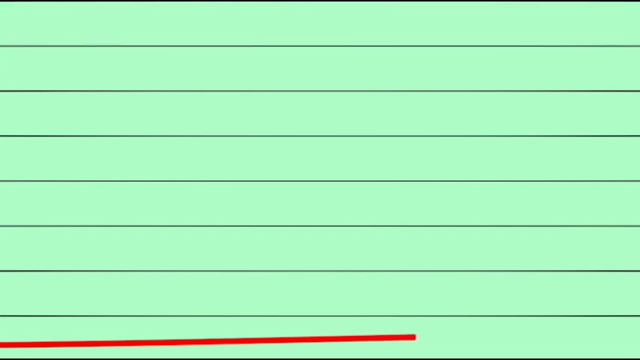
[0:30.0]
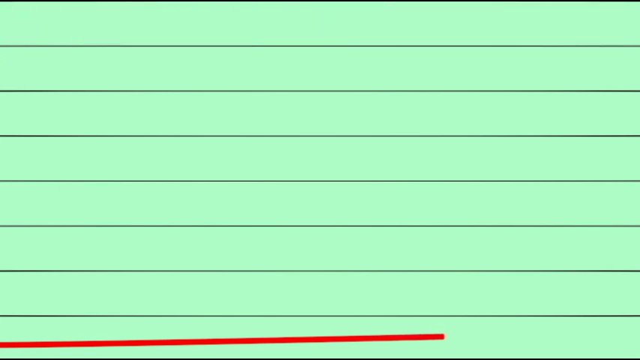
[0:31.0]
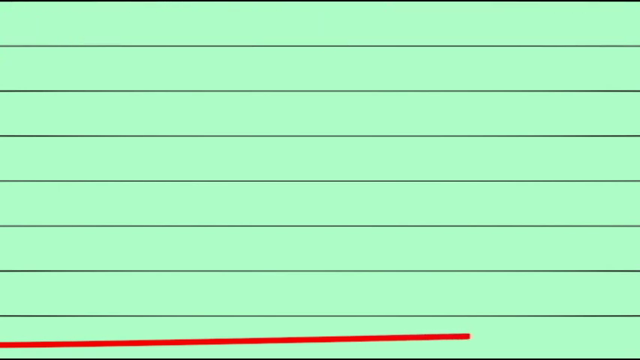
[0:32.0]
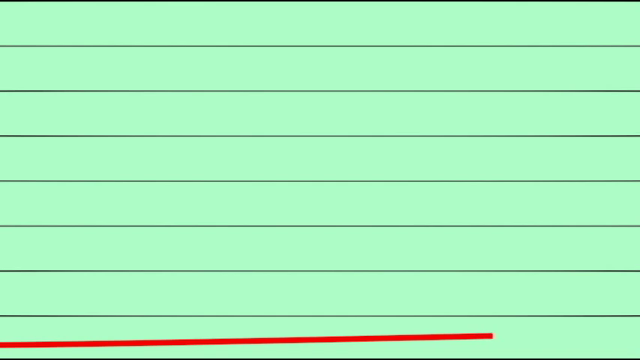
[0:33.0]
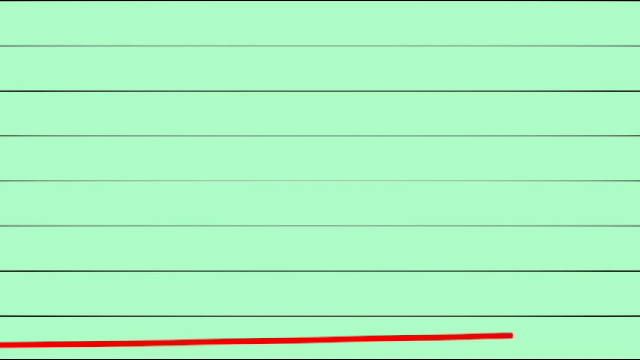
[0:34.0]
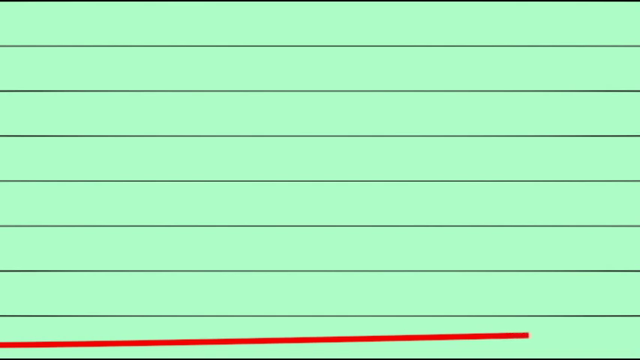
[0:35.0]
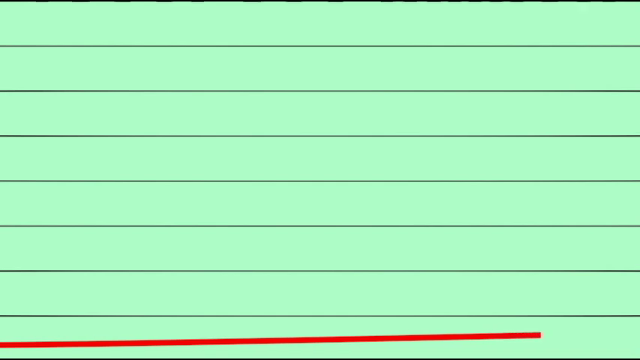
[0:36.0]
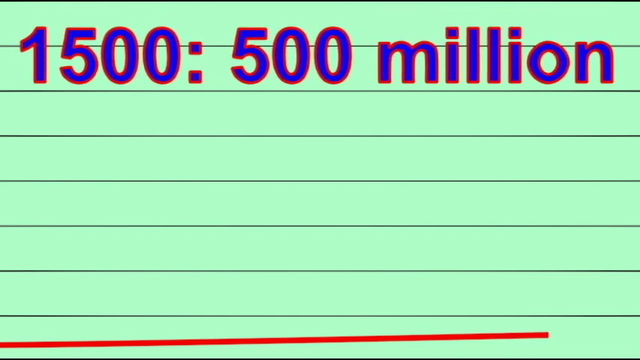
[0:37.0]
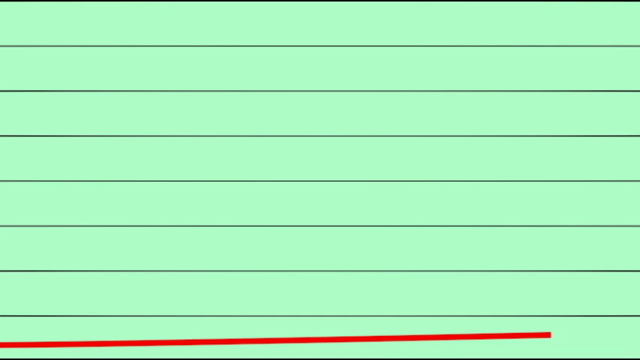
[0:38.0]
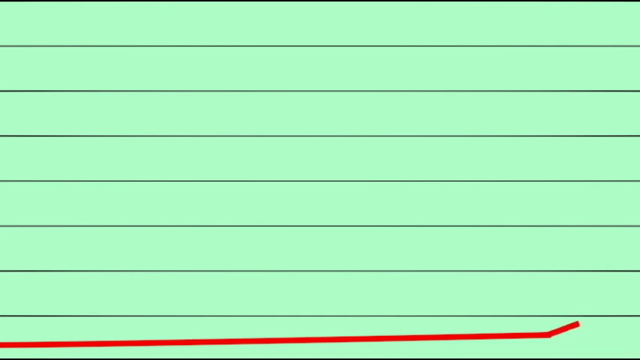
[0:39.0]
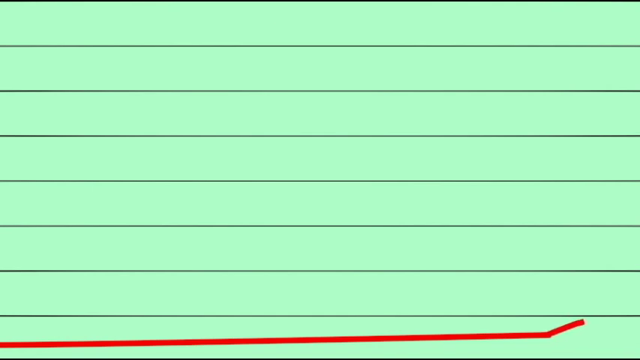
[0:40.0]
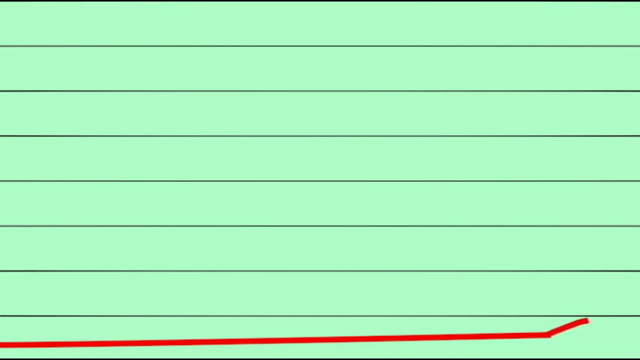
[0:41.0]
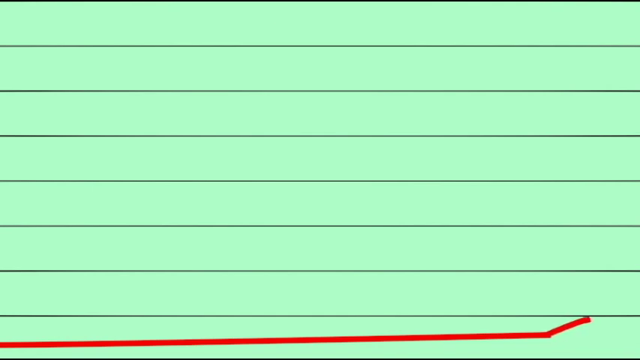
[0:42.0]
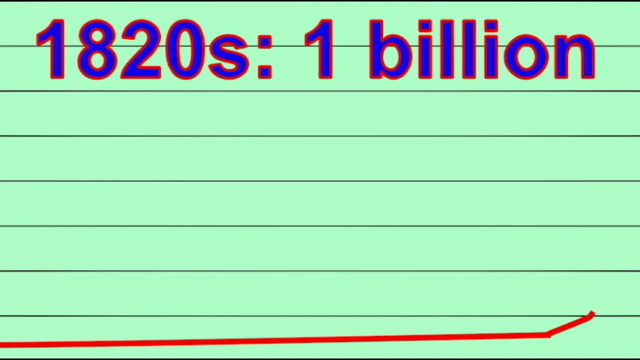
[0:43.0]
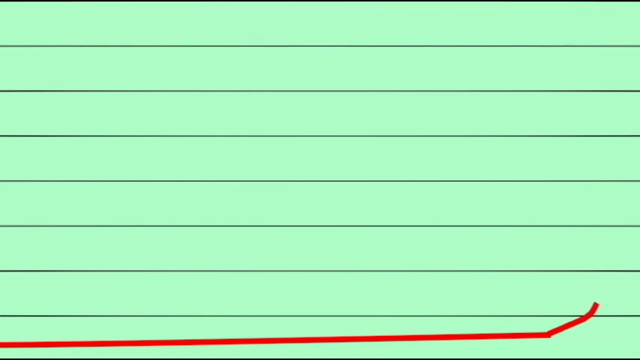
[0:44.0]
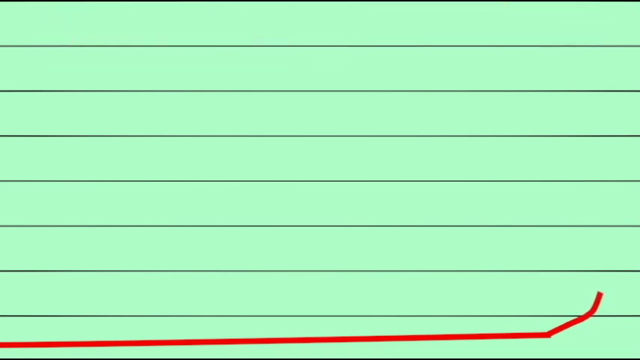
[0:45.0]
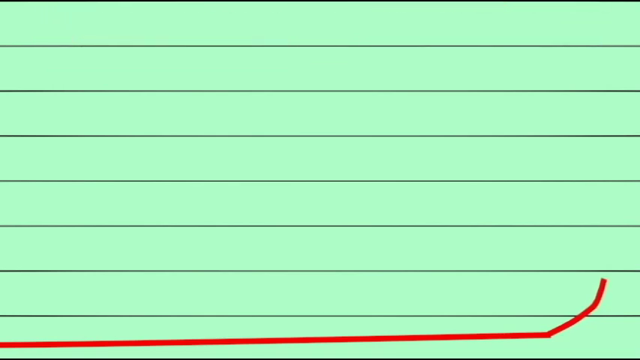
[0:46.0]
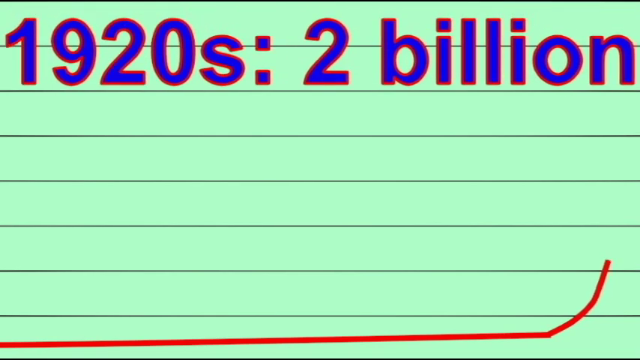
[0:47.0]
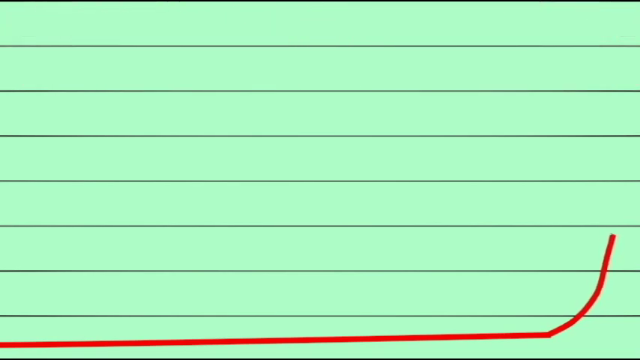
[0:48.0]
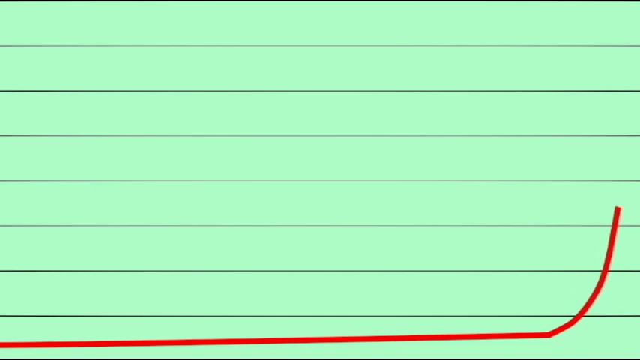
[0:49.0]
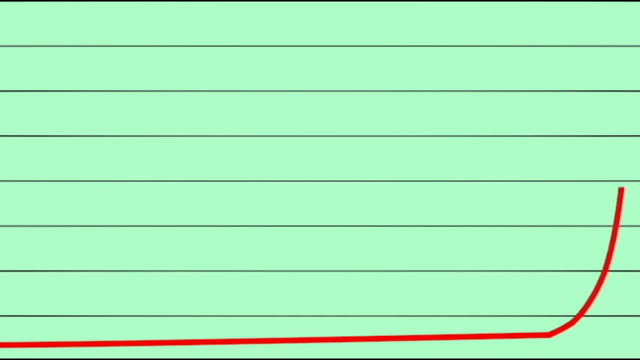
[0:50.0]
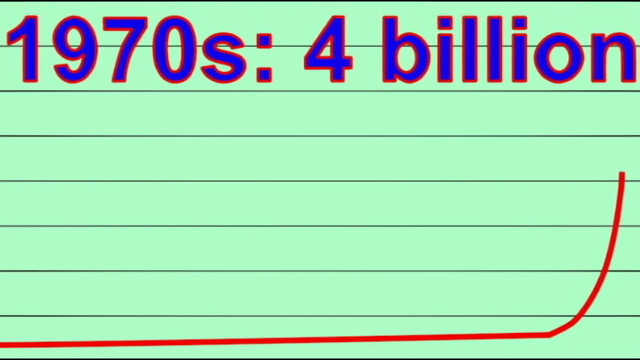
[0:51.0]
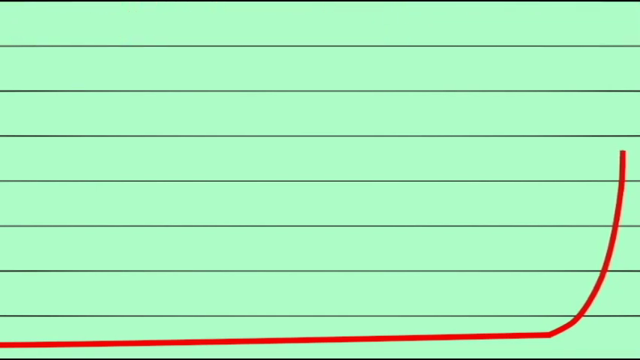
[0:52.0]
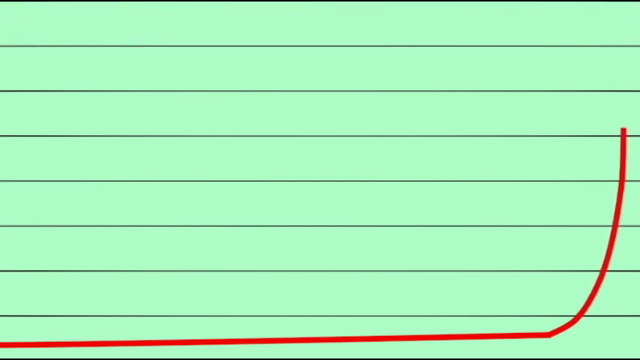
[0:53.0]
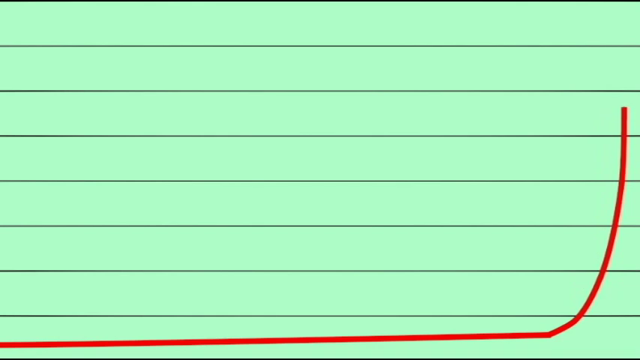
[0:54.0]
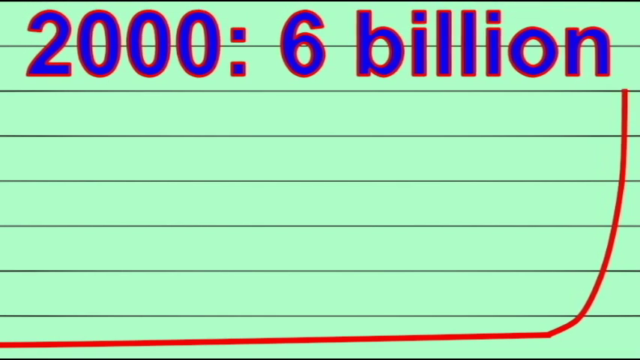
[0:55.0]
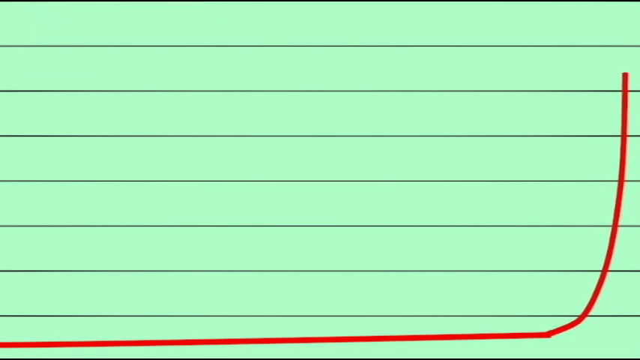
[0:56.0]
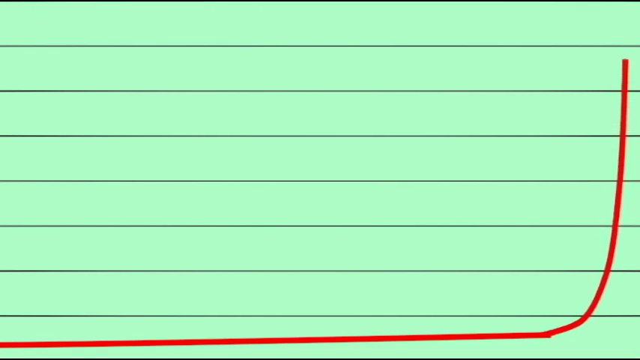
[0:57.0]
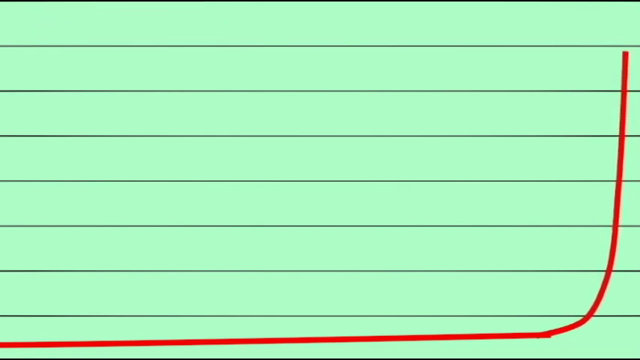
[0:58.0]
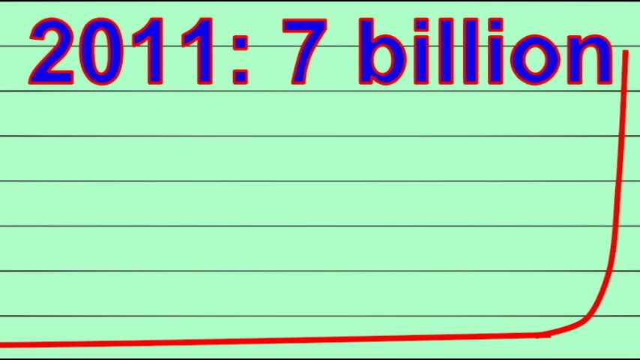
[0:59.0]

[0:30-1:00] The view stays zoomed in on what looks like a piece of notebook paper with a turquoise background. Text in blue font outlined in red pops up and disappears. First it reads "1500: 500 million," with "million" written out in letters. That goes away, leaving the blank turquoise paper, and then "1820s: 1 billion" appears in the same red-outlined blue font. A red line at the bottom snakes its way all the way along, and as it reaches the end of the paper it slowly goes up. Then the text "1920s: 2 billion" appears, followed by entries for the 1970s (4 billion), 2006, and 2011.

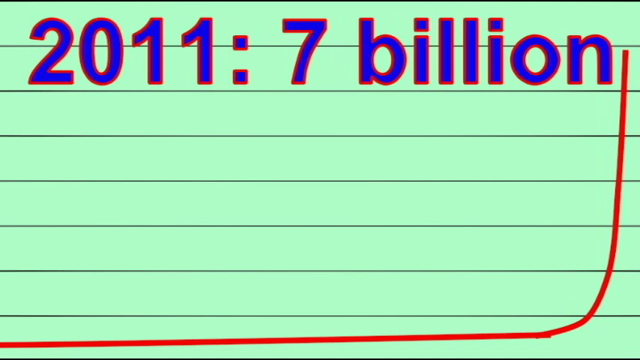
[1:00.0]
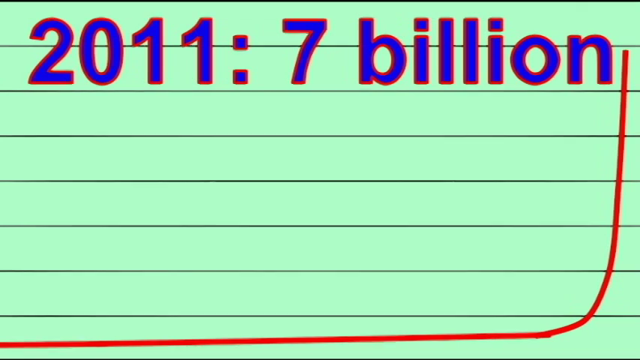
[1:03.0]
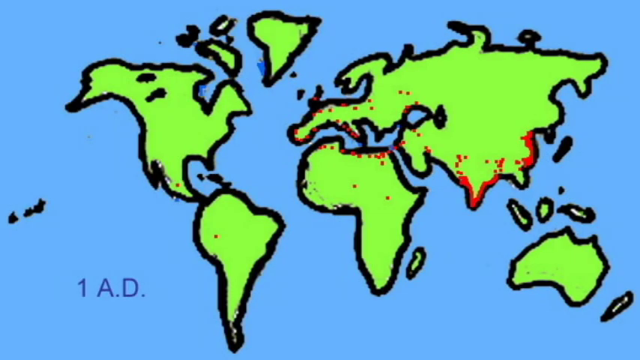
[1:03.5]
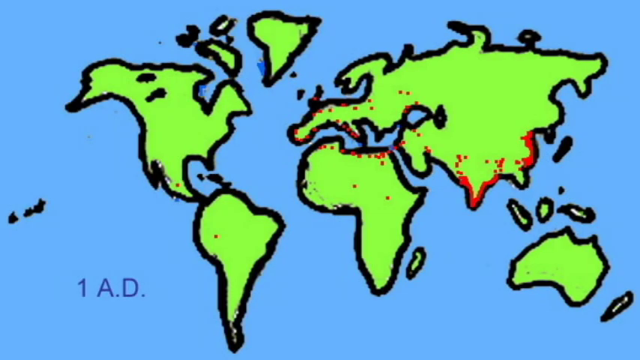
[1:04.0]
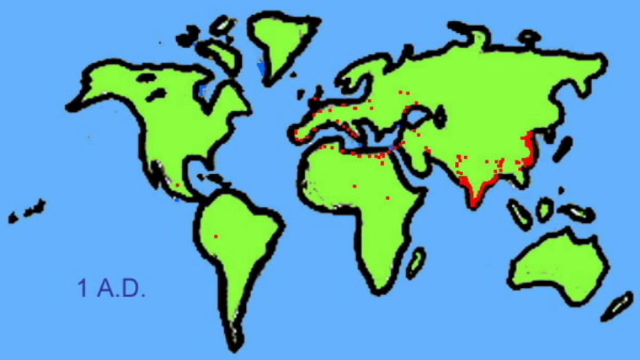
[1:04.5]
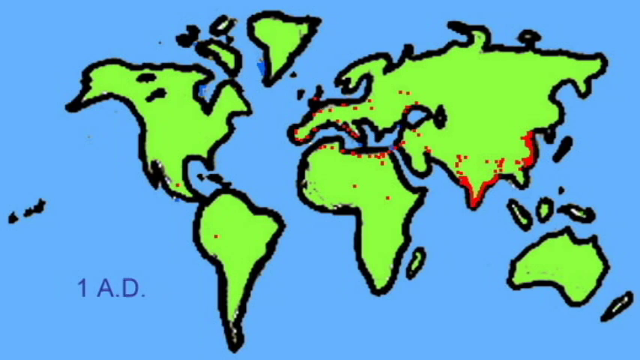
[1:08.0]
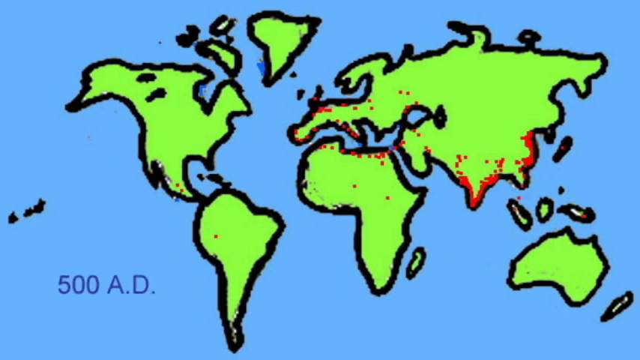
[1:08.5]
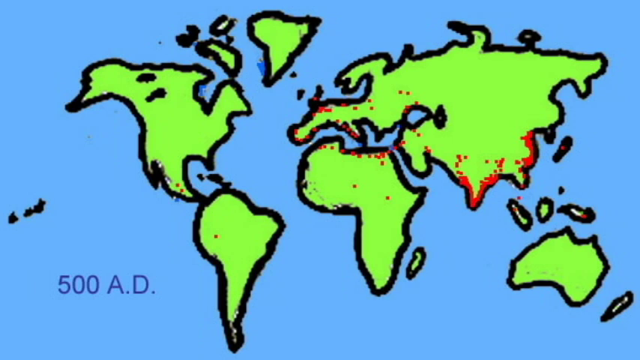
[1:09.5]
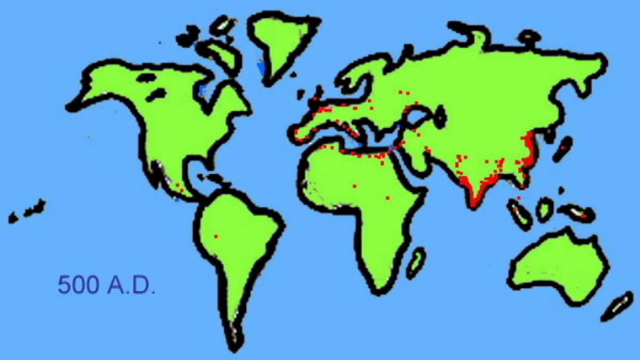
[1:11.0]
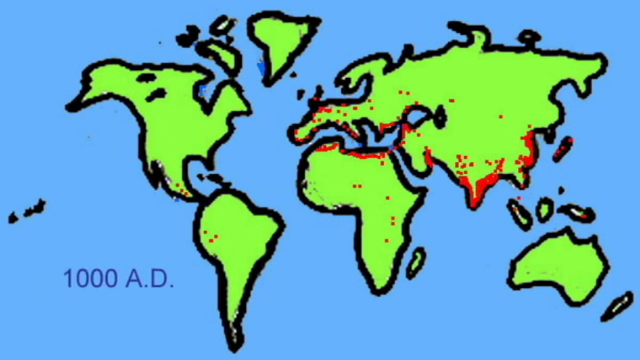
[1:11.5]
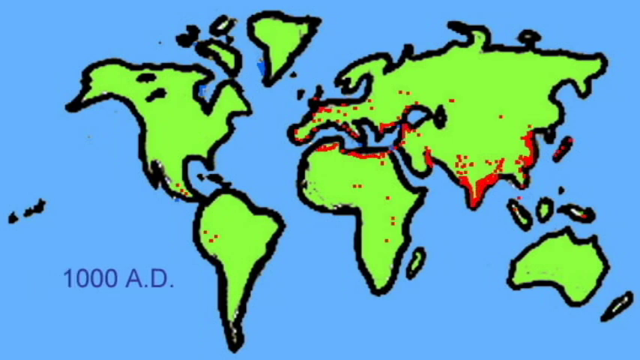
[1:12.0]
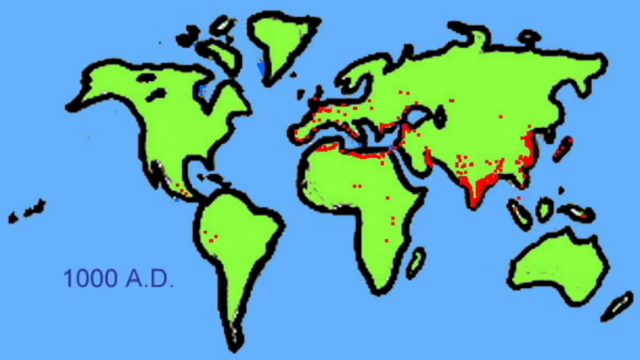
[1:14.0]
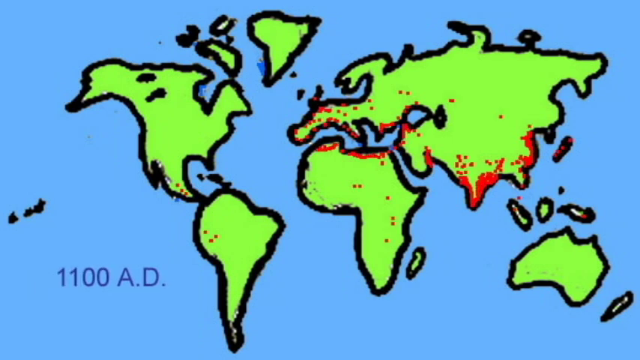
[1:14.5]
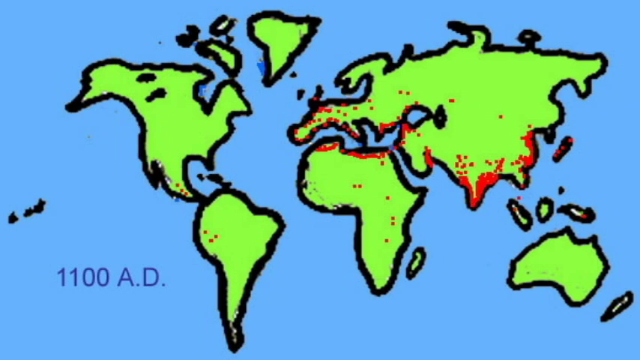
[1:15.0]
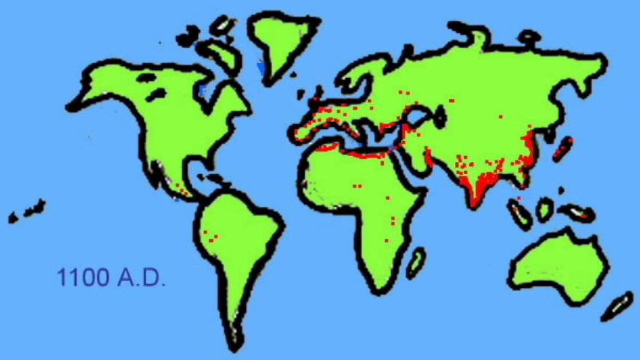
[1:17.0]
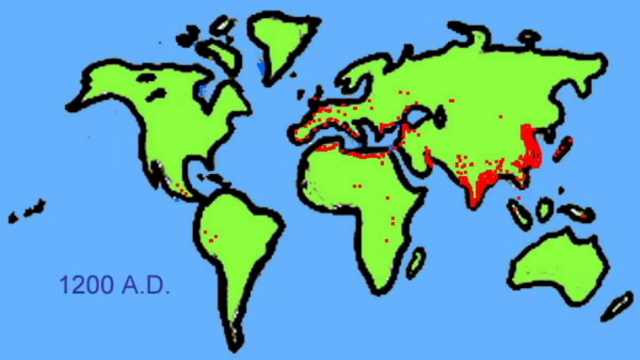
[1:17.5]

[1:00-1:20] The text now reads "2011, seven billion," that line is at the very bottom, and the red line is now almost at the top of the page. The video then switches to a digital image of a map showing the ocean and the seven continents, with little red dots that apparently show where people are concentrated. It is marked 1 AD, and most of the dots are on the Asian continent, with some at the top of Africa and the Middle East. Then it reads 500 AD, and the red dots become a little more concentrated but remain on the same continents. At 1000 AD the dots get even denser and show up more in North America, South America and throughout Africa. Then comes 1200 AD; with every time period, the dots grow more dense.